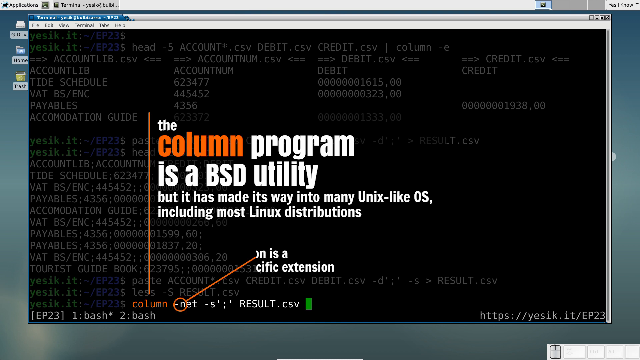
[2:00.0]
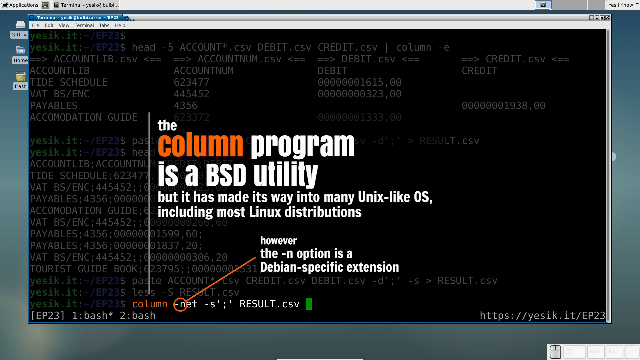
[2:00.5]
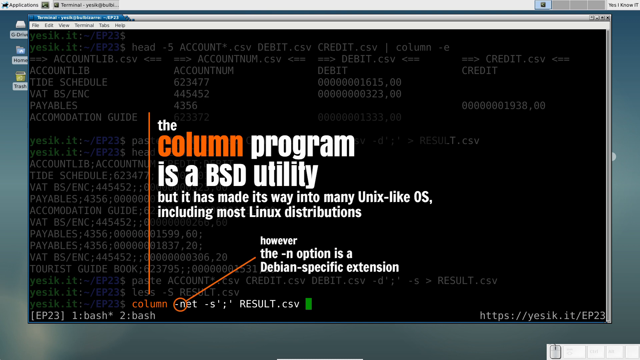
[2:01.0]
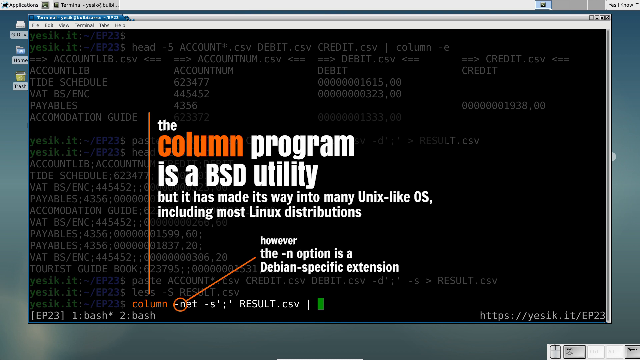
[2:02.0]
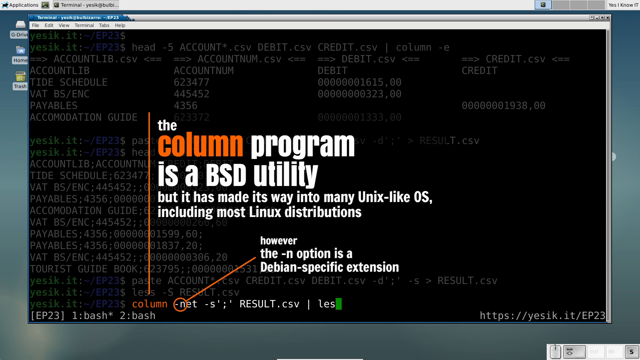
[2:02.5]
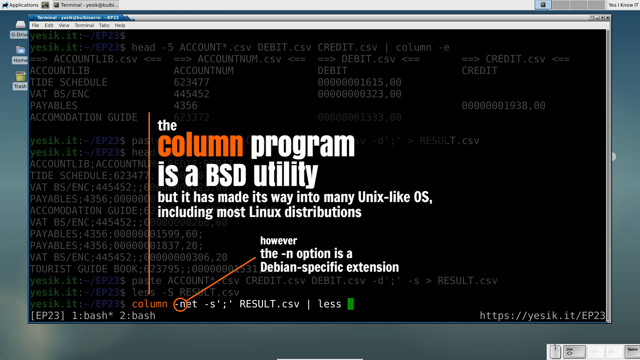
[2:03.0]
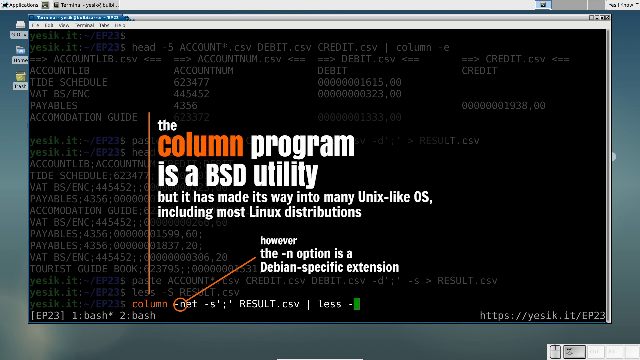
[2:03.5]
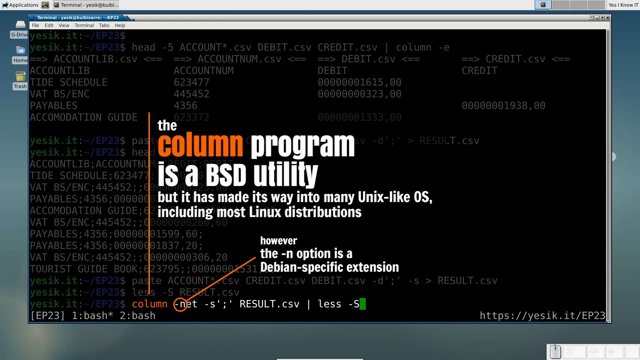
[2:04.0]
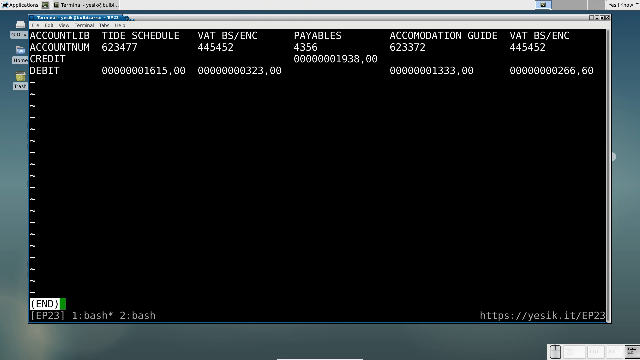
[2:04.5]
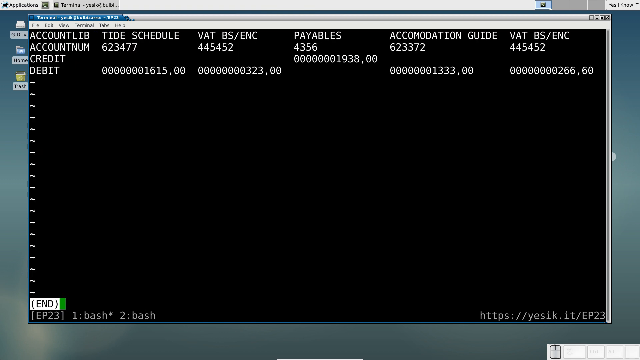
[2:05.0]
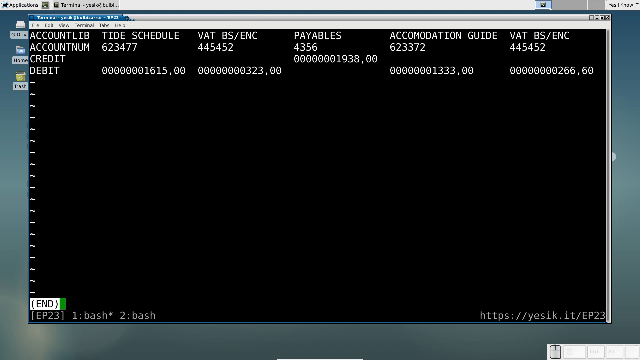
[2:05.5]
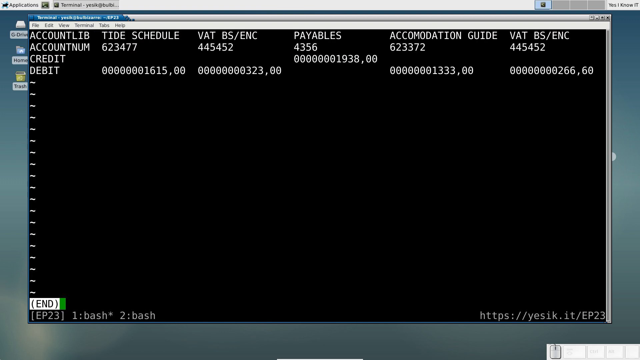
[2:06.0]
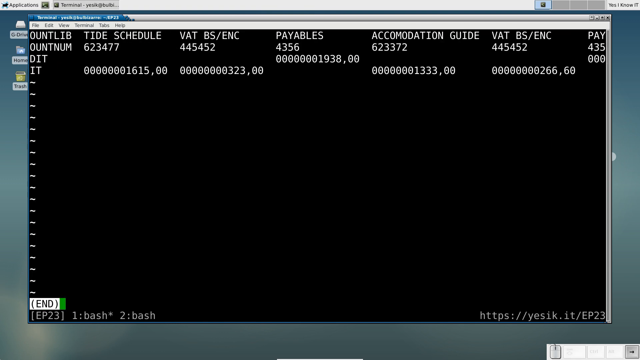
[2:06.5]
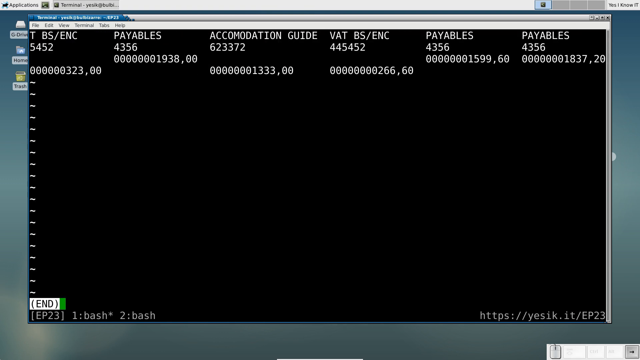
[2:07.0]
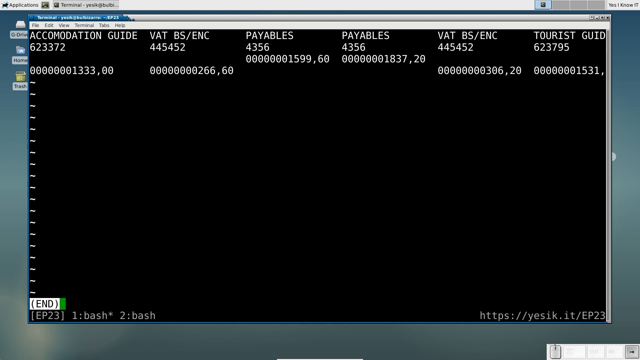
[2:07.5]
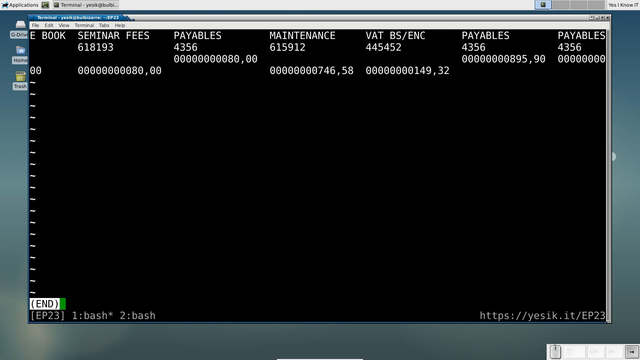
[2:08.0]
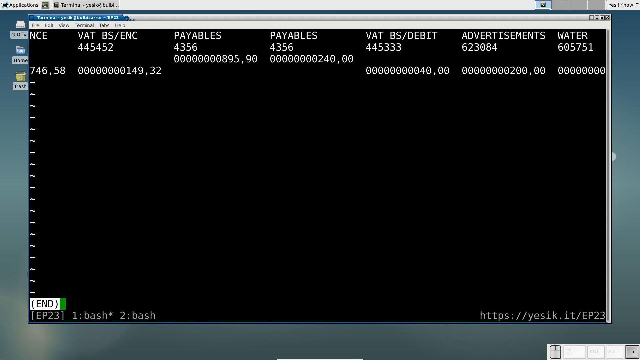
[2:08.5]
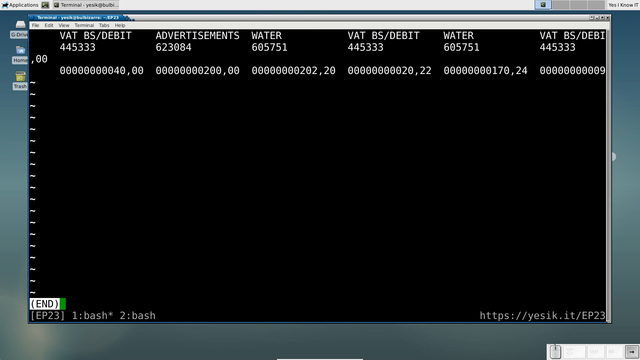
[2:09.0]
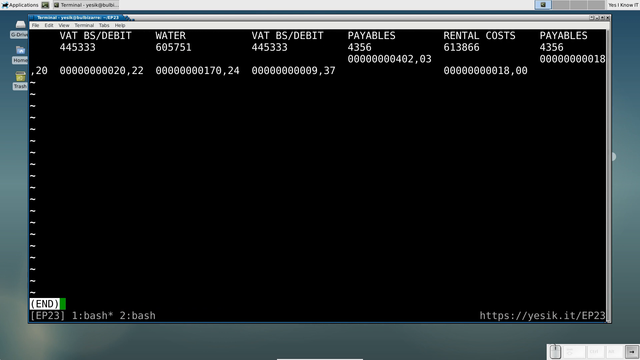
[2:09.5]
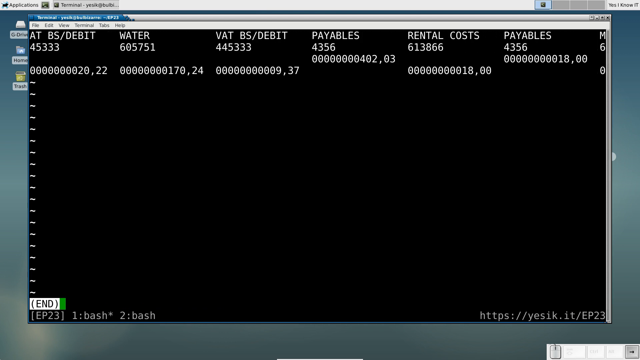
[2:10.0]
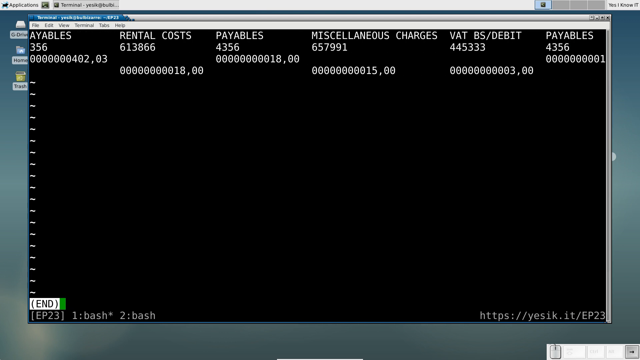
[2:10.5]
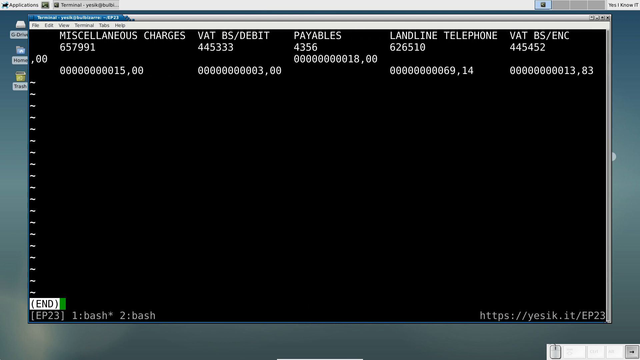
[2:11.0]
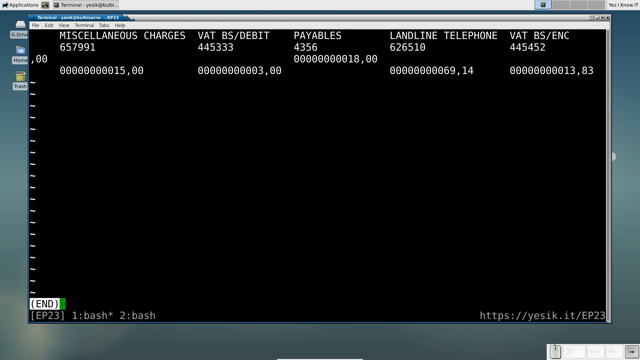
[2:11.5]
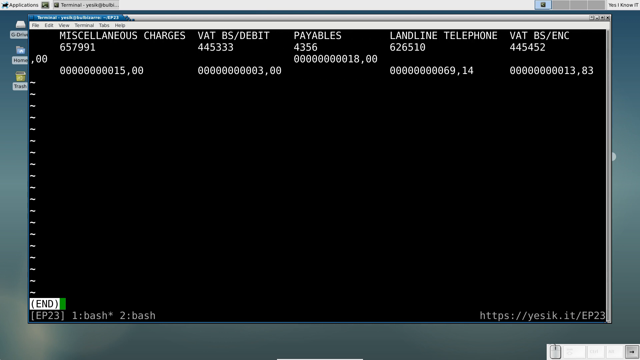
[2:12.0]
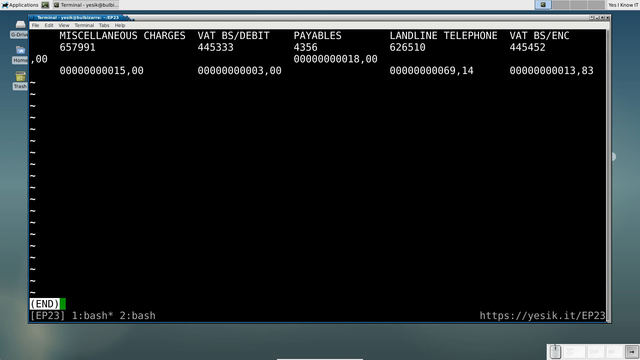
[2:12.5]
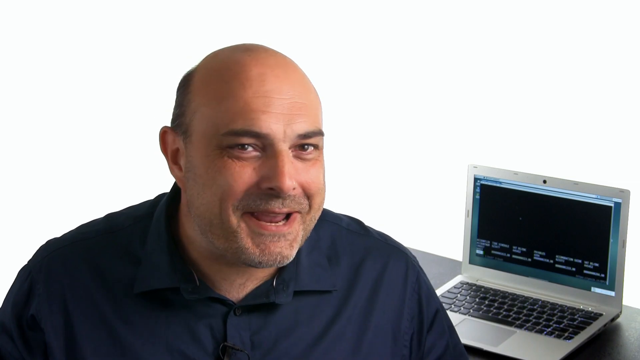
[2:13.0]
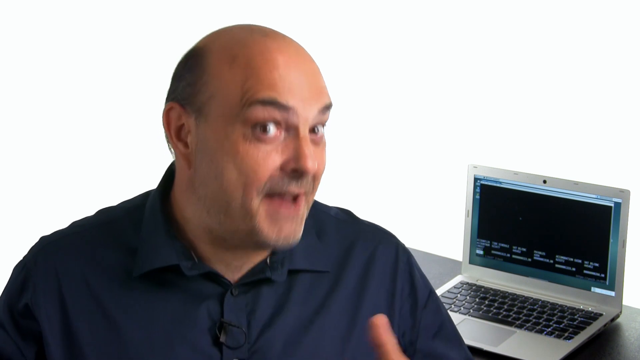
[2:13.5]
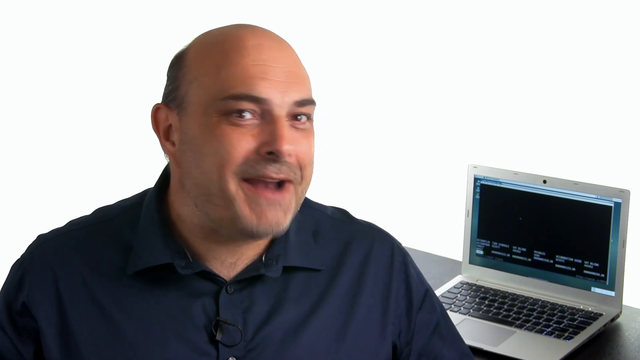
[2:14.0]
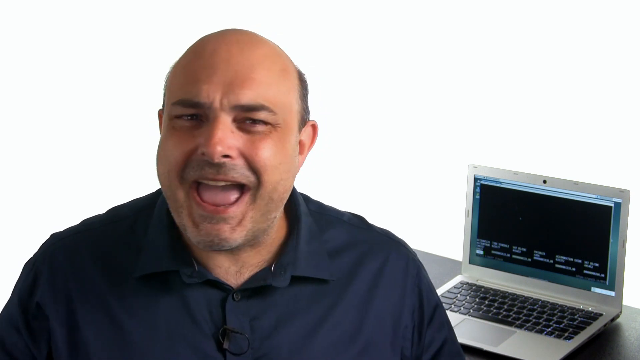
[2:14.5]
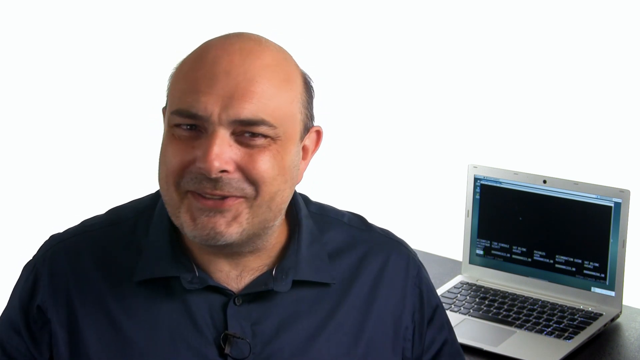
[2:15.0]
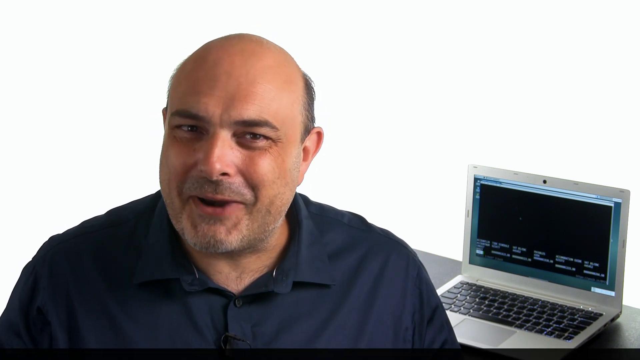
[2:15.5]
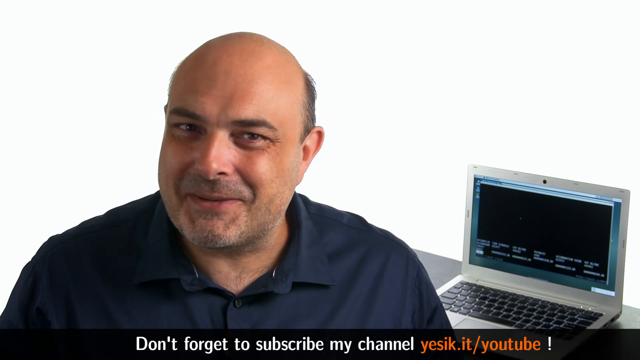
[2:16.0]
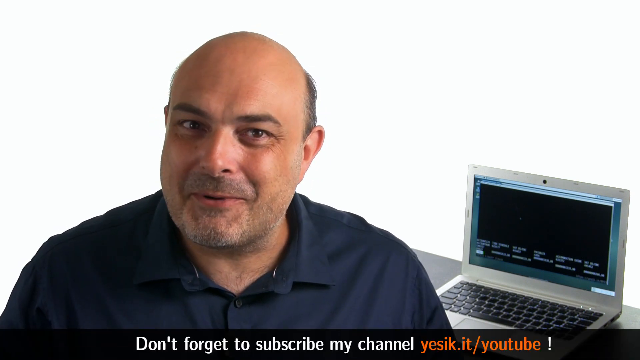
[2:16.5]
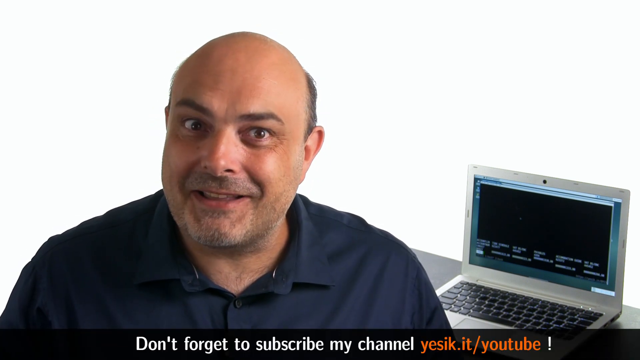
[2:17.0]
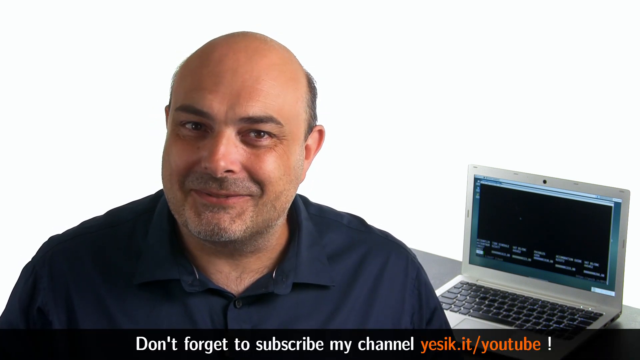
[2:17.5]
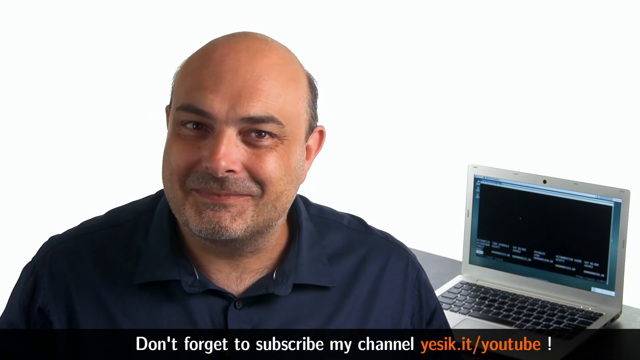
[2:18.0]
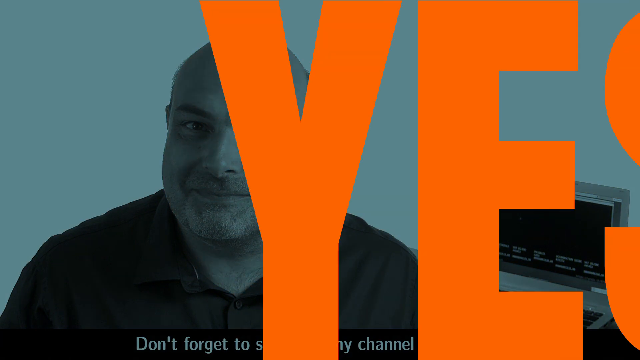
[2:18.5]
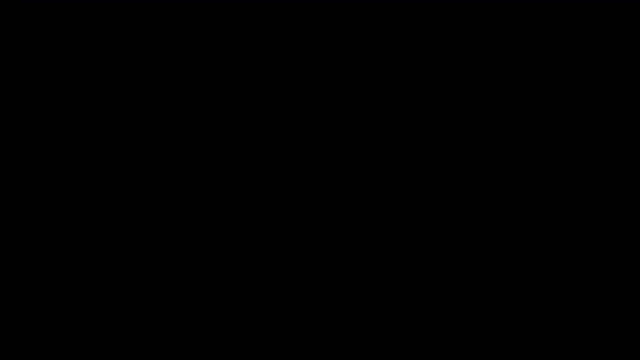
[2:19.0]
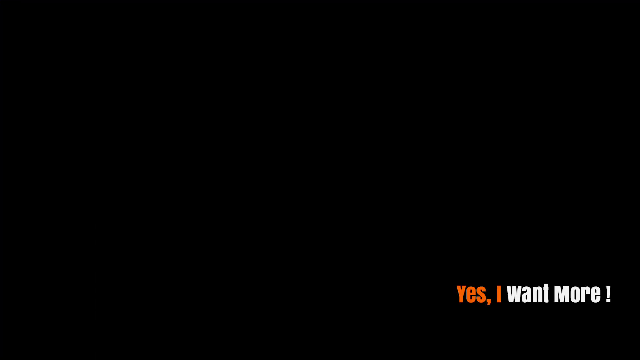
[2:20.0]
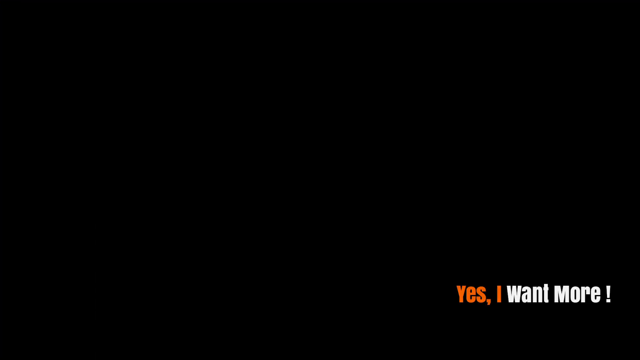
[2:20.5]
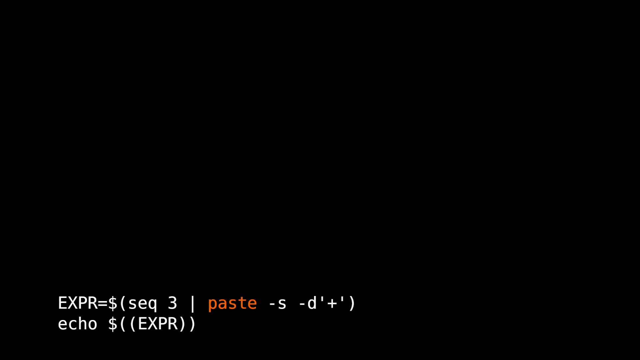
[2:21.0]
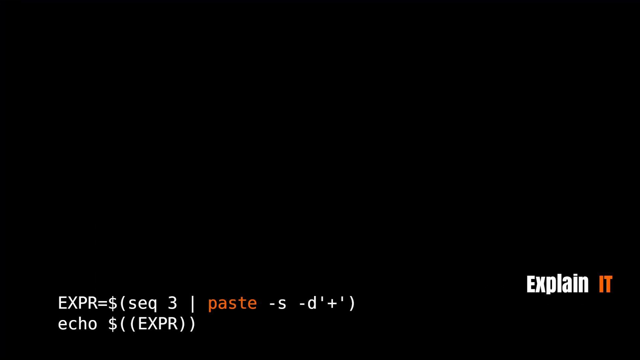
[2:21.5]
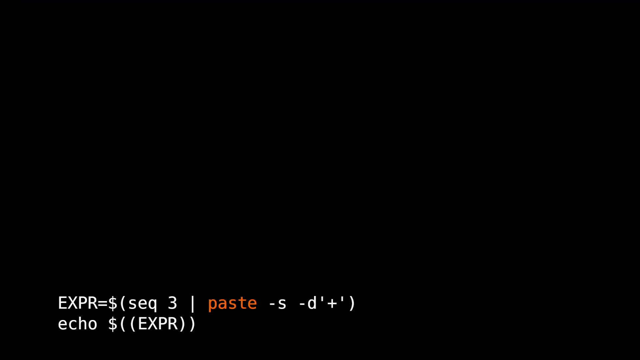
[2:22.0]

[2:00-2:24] A circle comes up around "net" at the bottom, and an arrow goes up to the right, followed by white text beginning "however the." More text keeps being typed across the bottom, and the view scrolls over to the right, continuing toward the right. It cuts back to the man talking and looking at the camera. He turns his head to the right and raises his eyebrows, and his right thumb comes up and goes back down. He tilts his head to the left, looks at the camera, starts talking and raises his eyebrows. The image turns grayish, and orange text flies across the screen very fast. It fades to black, with text in the bottom left corner, and text pops up in the bottom right corner reading "yes, I want more." The bottom left reads "EXPR = $ sequence three, paste -S -D +," and on the right side it says "try it."